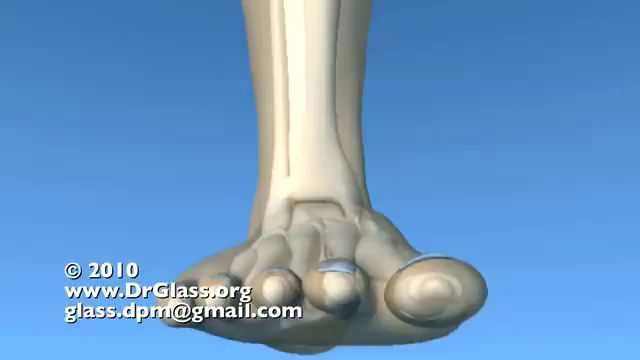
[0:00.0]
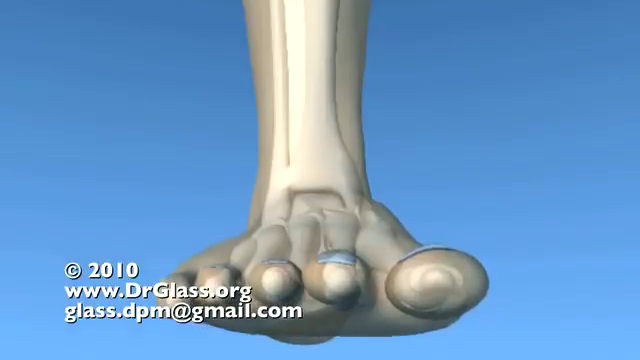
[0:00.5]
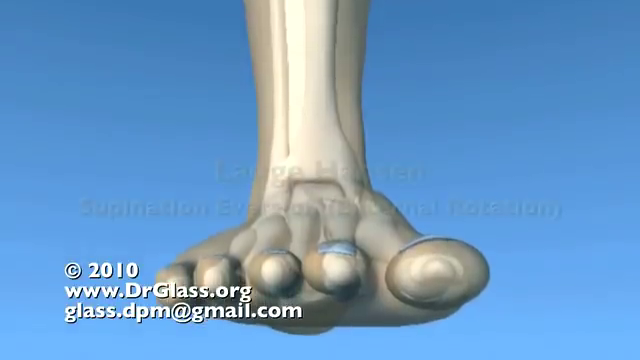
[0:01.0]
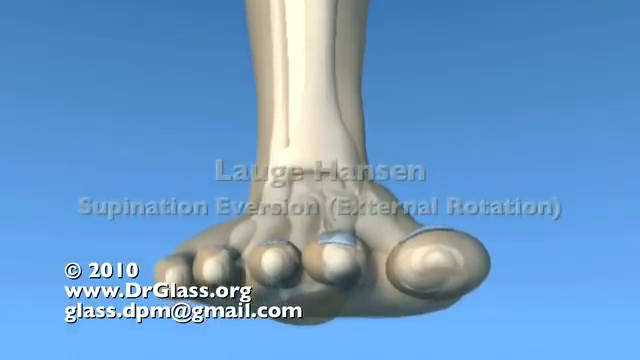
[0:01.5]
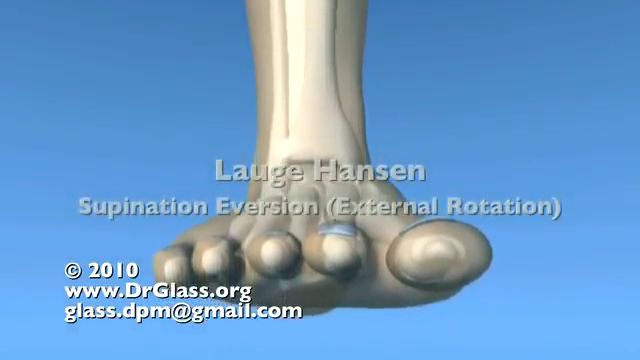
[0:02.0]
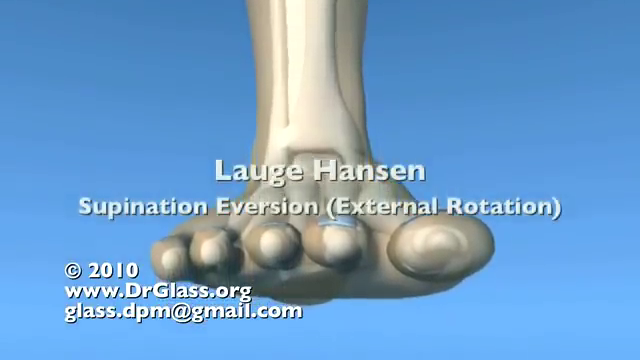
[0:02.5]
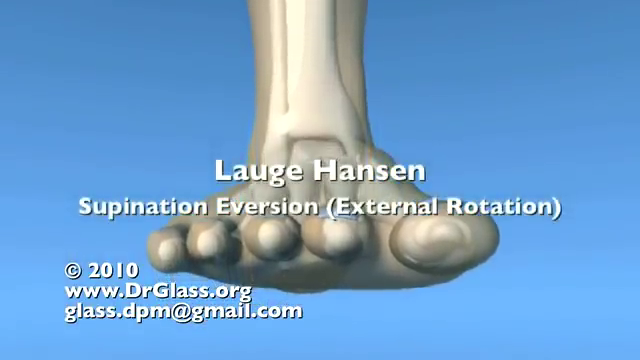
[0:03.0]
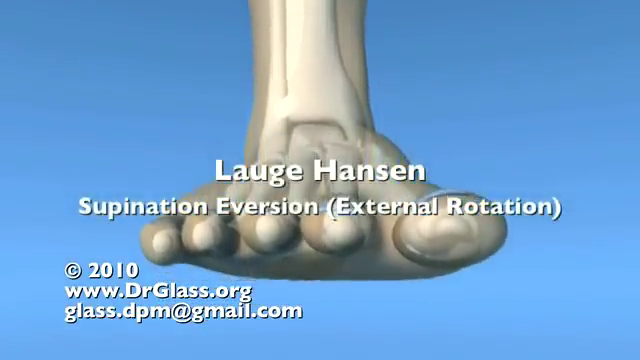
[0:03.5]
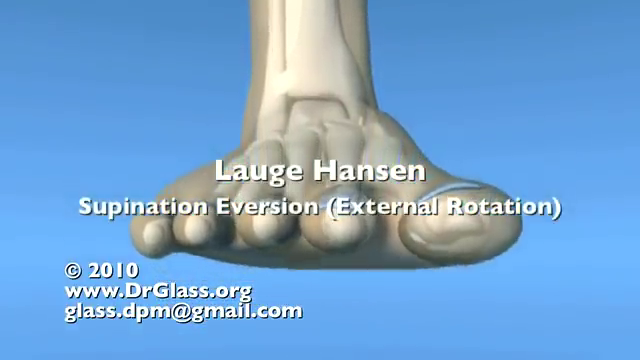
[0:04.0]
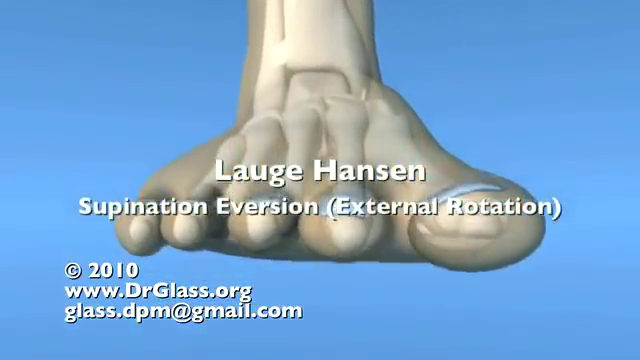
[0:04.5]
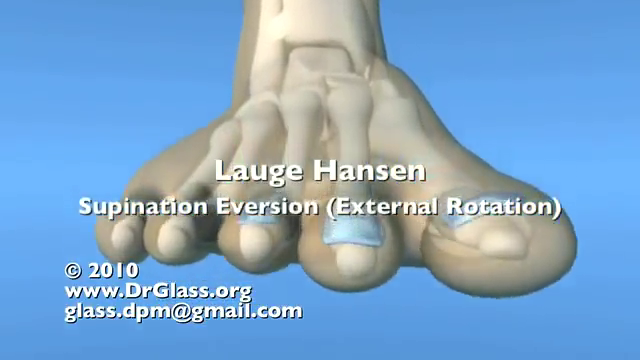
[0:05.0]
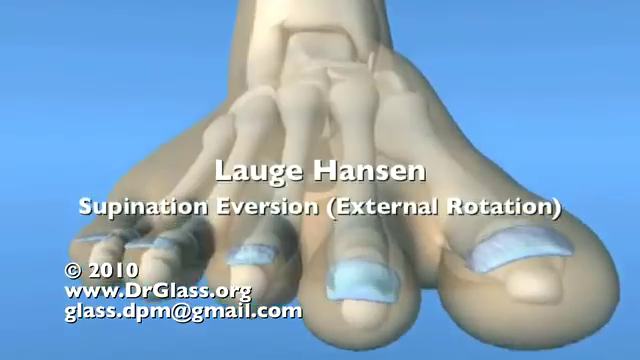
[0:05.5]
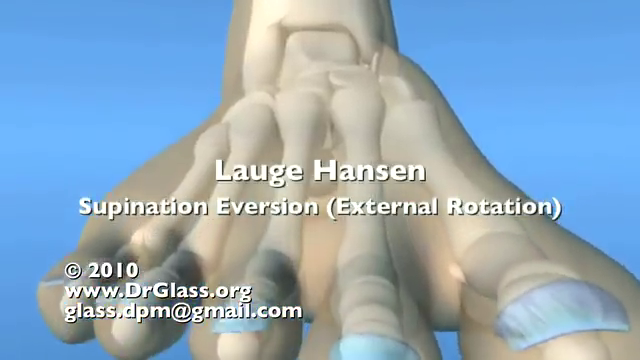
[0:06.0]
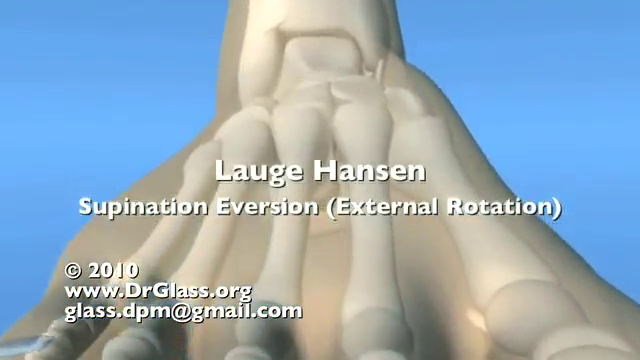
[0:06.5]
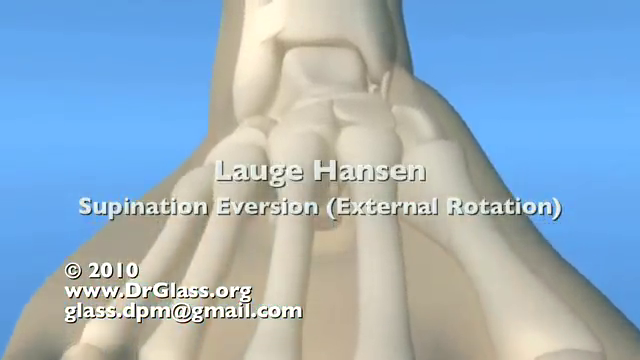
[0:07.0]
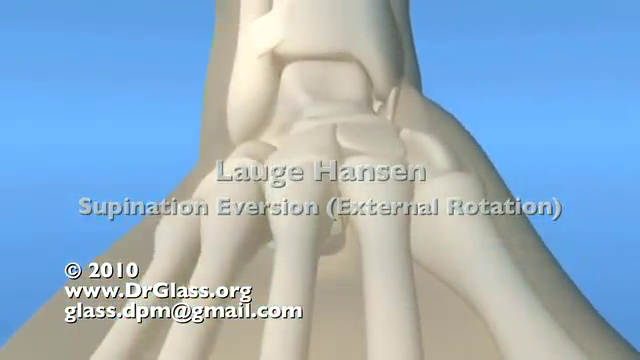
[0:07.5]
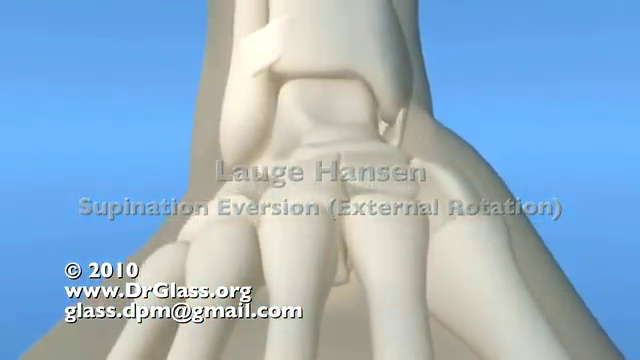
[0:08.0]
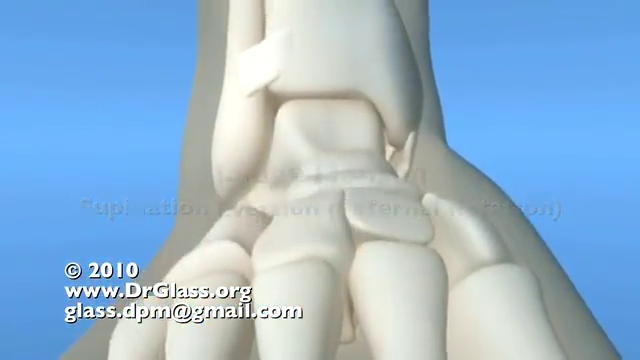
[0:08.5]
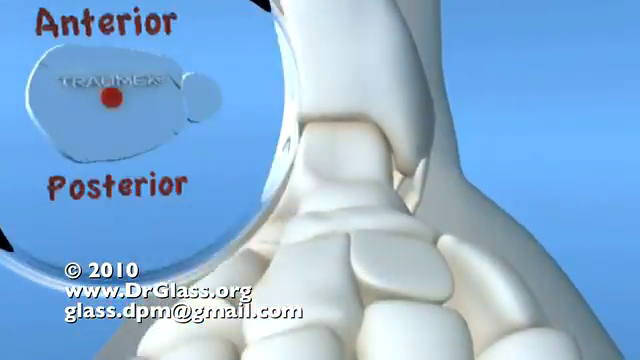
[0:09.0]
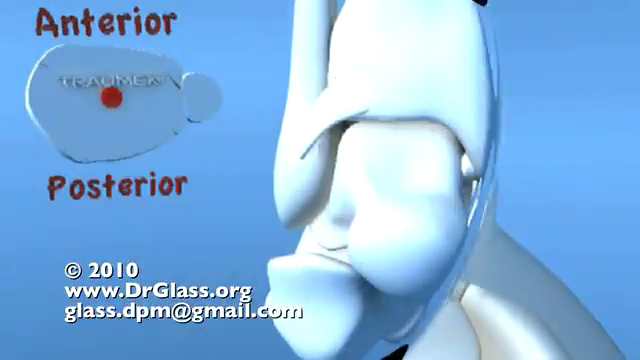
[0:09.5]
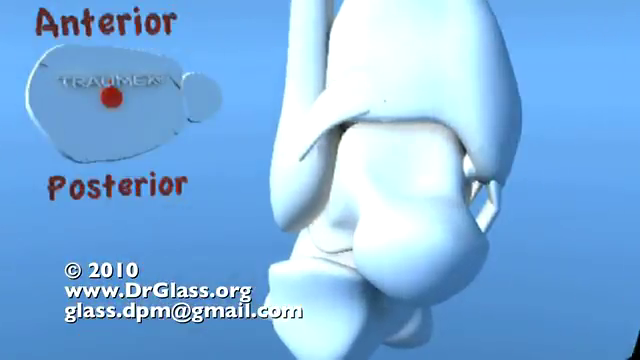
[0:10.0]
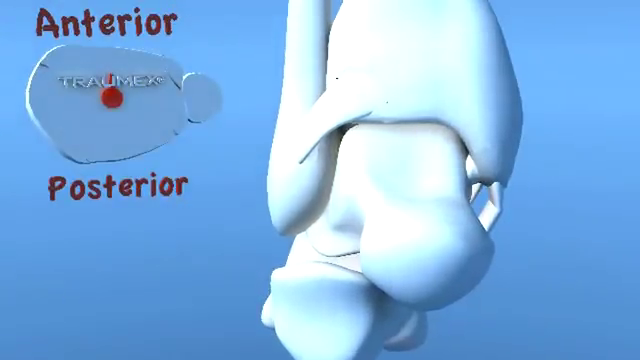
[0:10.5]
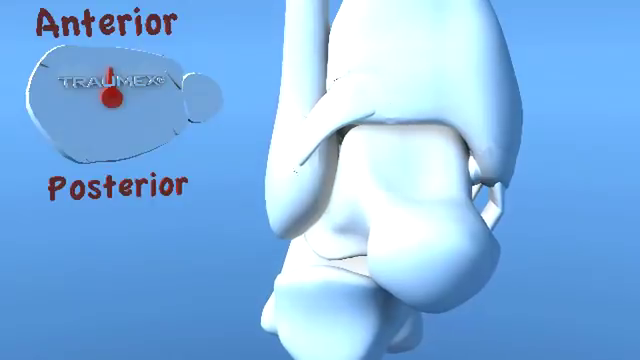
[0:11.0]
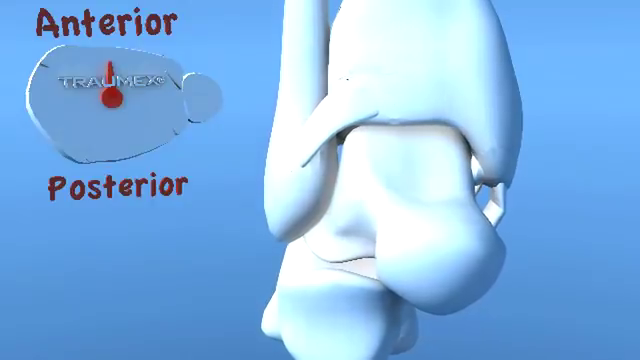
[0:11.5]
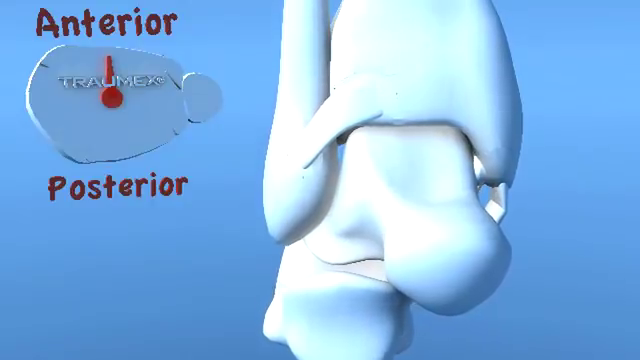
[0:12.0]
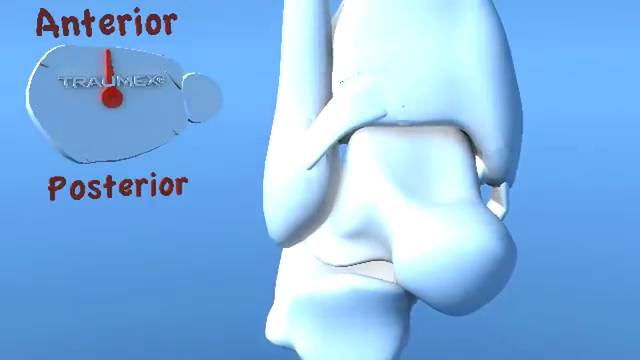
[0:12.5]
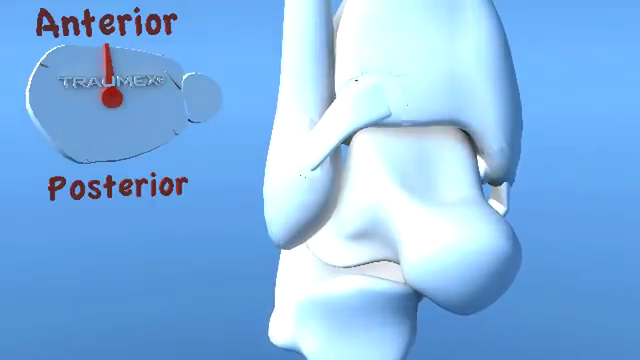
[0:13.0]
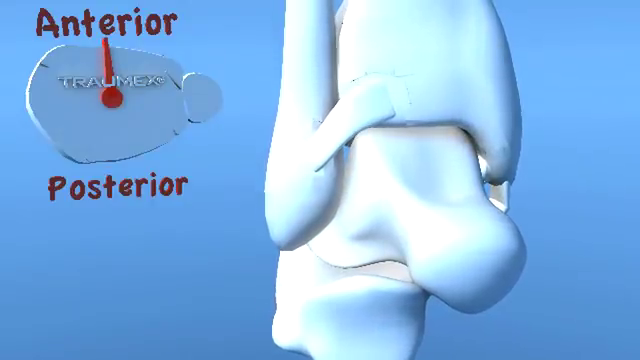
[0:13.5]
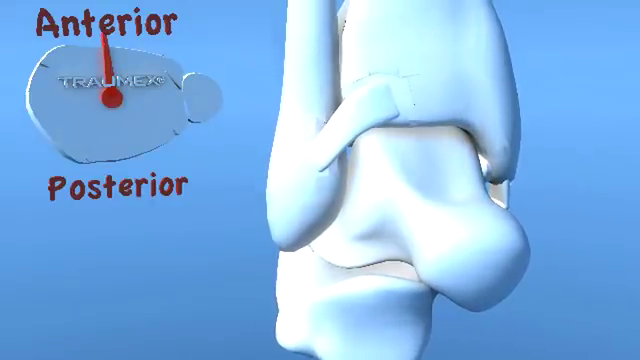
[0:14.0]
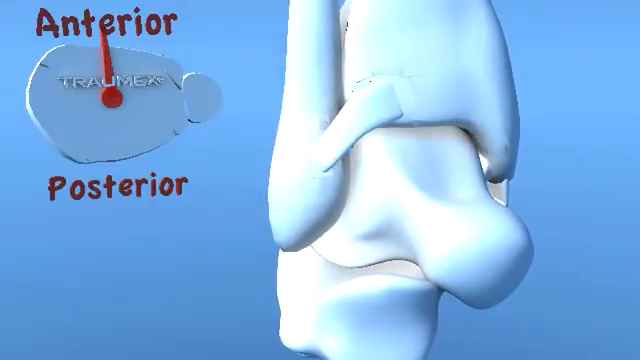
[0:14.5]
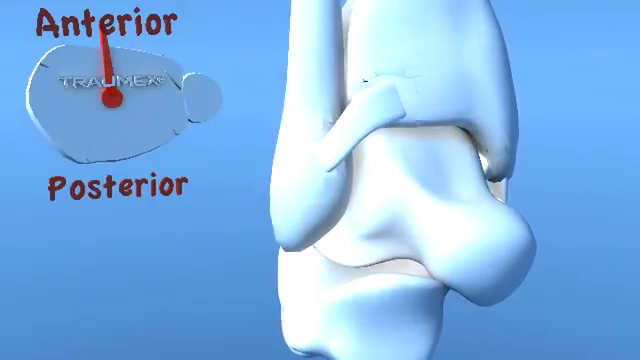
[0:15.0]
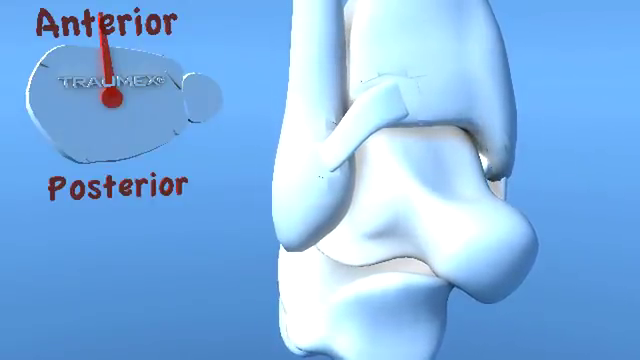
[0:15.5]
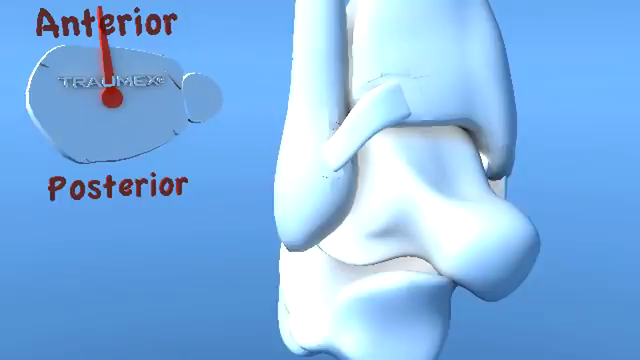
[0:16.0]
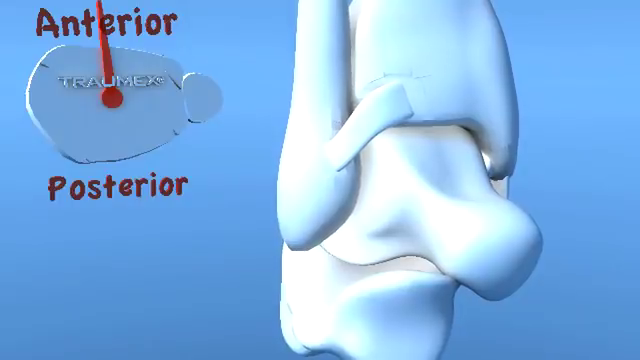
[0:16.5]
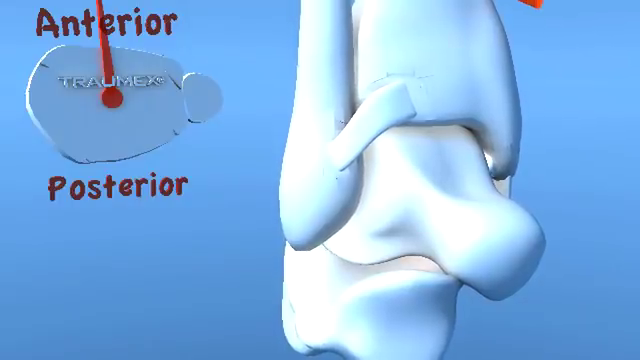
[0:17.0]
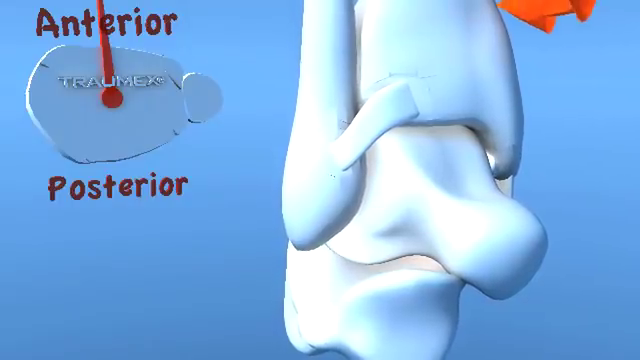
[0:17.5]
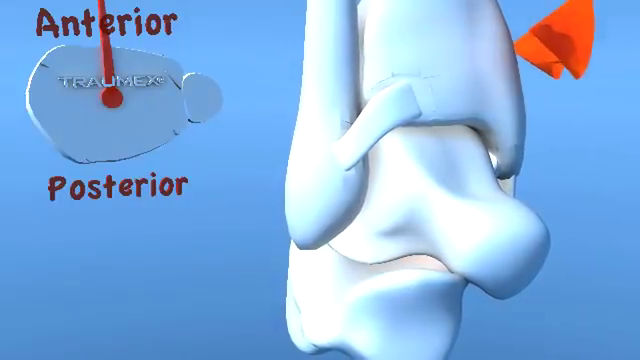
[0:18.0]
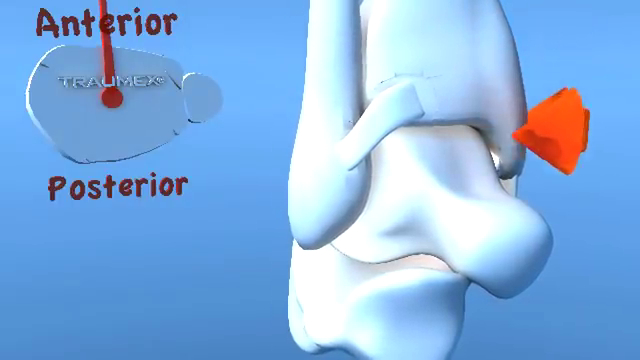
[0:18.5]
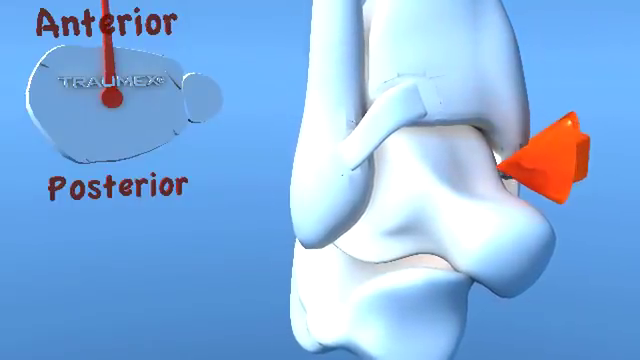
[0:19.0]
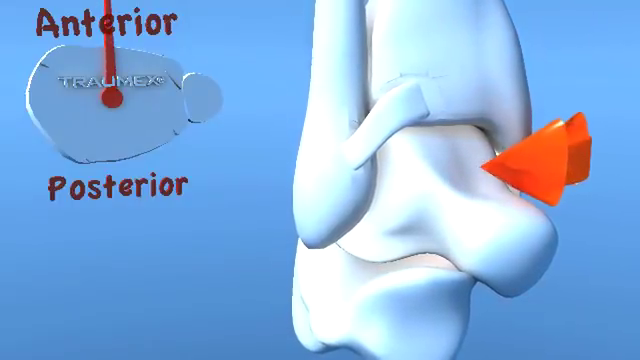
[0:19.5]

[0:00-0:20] The video opens on a sky blue background. In the bottom left-hand corner, text reads "www.drglass.org", followed by an email address and a copyright logo from 2010. A figure of a skeleton of a foot is shown, and white text appears over the image reading "Lauge Hansen Supination Eversion (external rotation)". The camera begins to zoom into the foot, comes over the top of it and focuses on the ankle. The camera moves up, and a bubble appears on the left-hand side of the screen; it expands until it completely covers the image of the skeleton and replaces it. Text reads "anterior" at the top of the bone and "posterior" at the bottom. To the left, with this text, is a bird's eye view of the bone with a red circle in the middle. The bone on the right, a zoomed-in part of the ankle, slowly begins to rotate. A red arrow falls from the top of the video and descends in line with the bone.